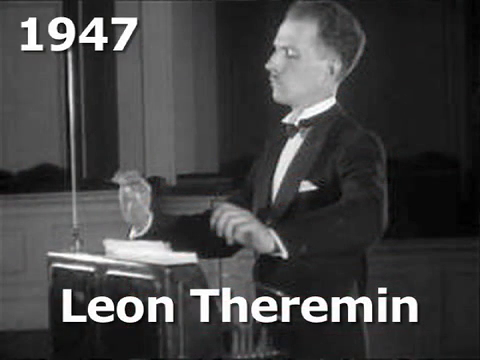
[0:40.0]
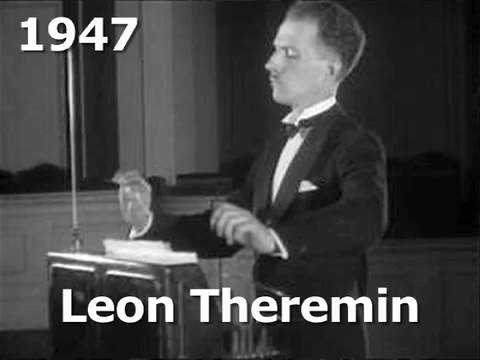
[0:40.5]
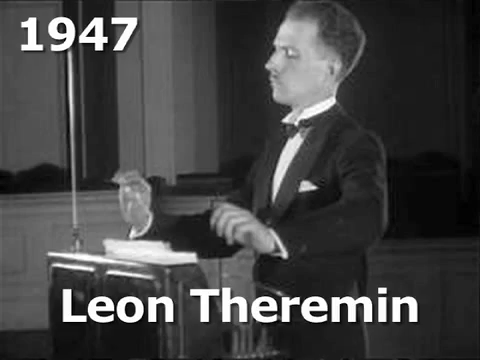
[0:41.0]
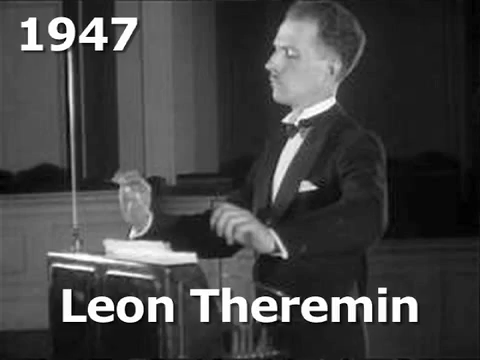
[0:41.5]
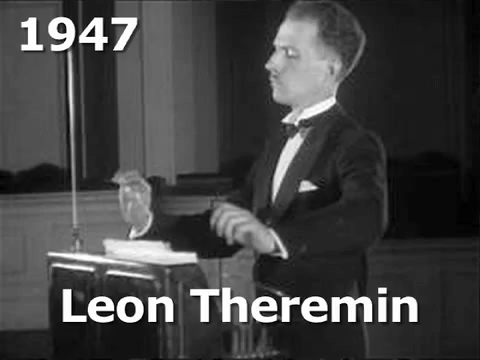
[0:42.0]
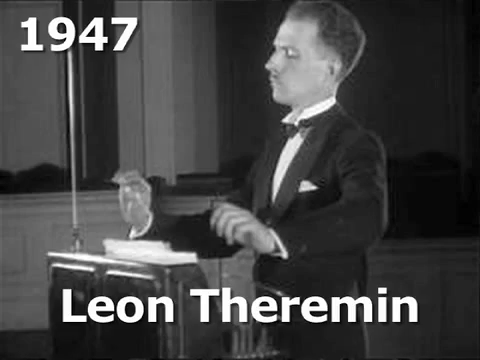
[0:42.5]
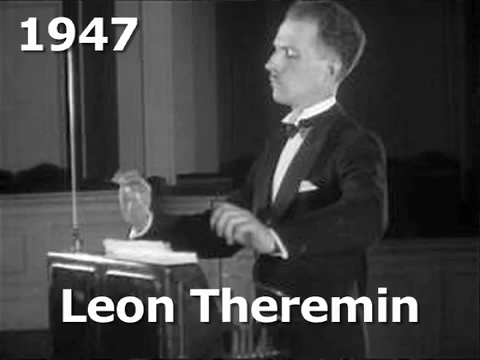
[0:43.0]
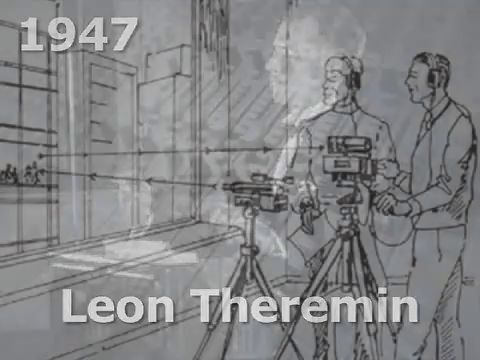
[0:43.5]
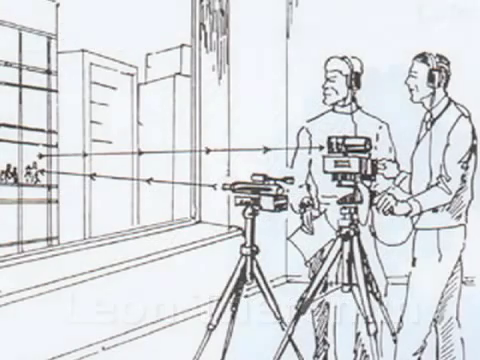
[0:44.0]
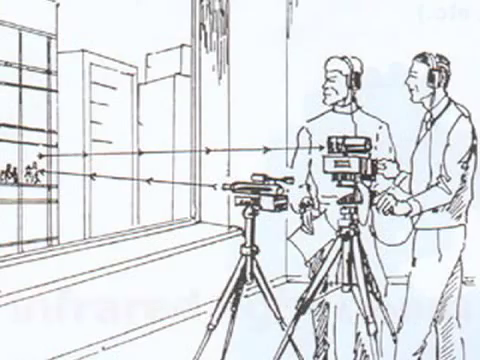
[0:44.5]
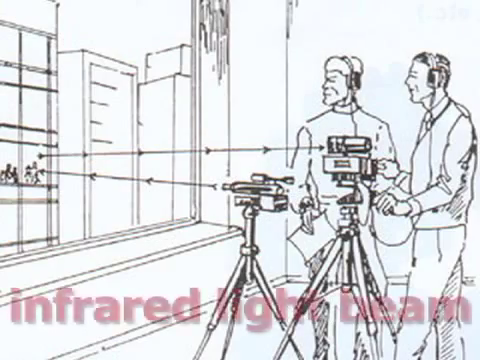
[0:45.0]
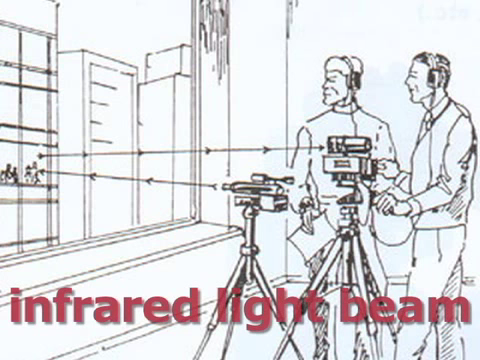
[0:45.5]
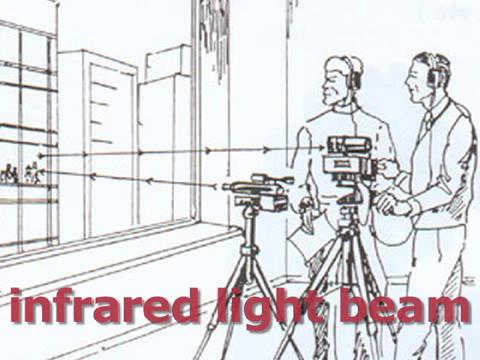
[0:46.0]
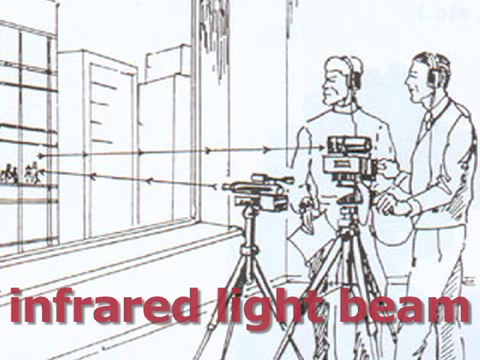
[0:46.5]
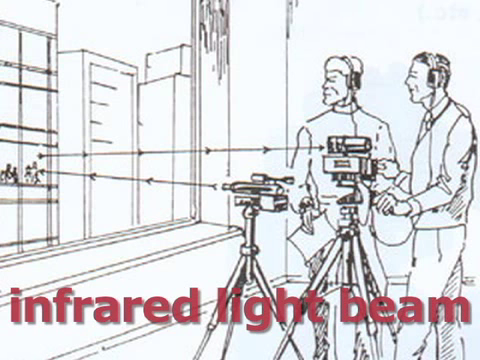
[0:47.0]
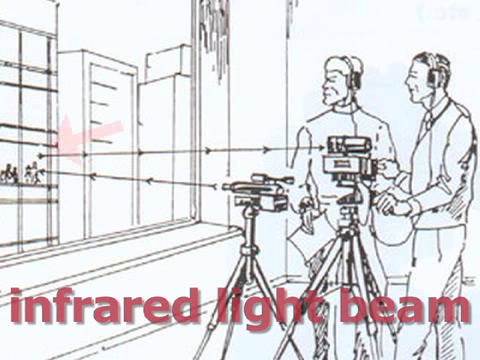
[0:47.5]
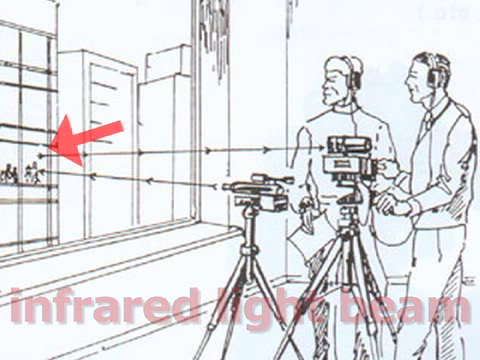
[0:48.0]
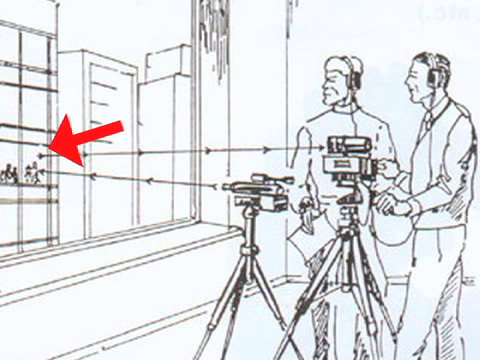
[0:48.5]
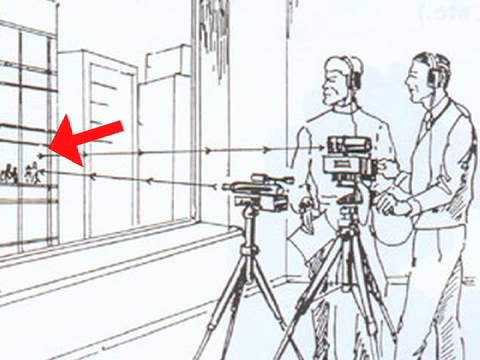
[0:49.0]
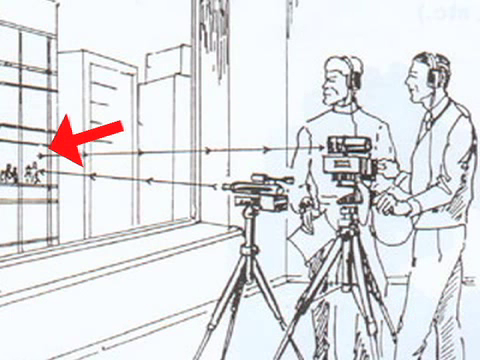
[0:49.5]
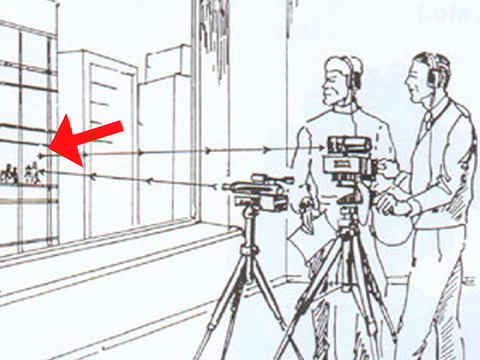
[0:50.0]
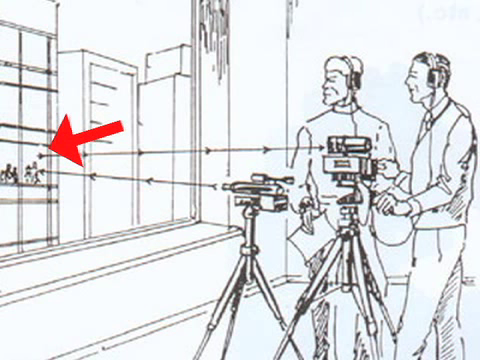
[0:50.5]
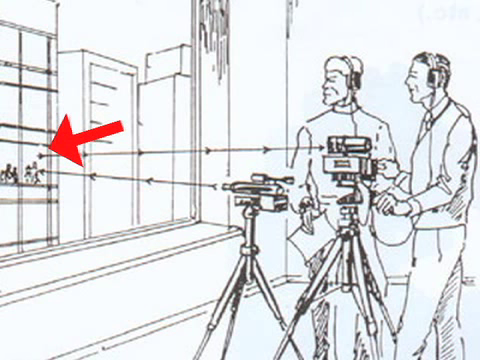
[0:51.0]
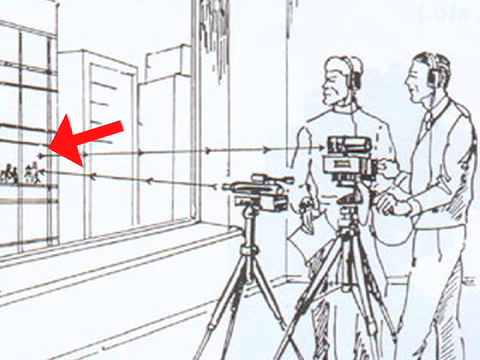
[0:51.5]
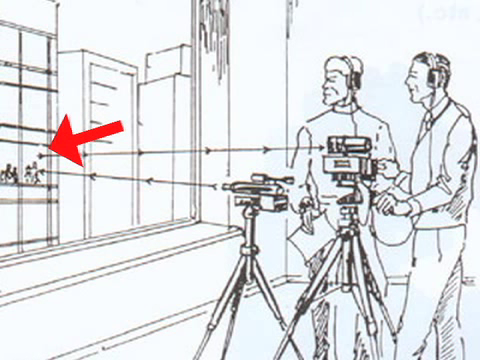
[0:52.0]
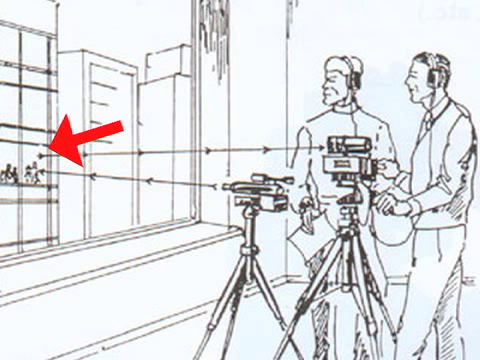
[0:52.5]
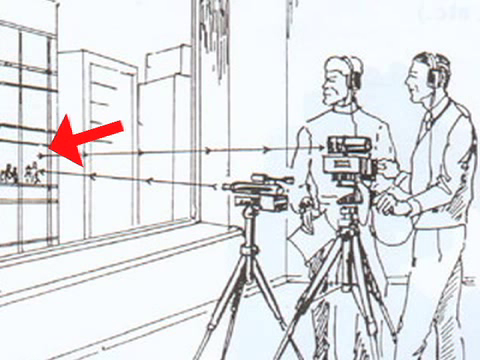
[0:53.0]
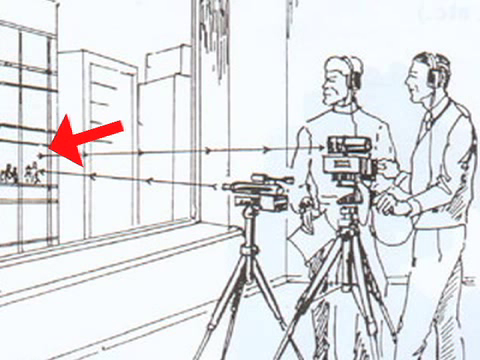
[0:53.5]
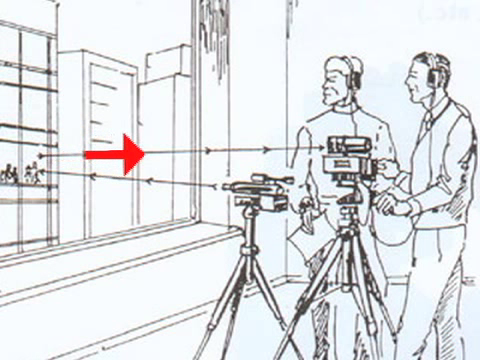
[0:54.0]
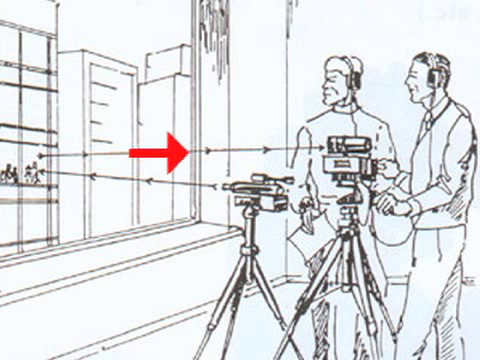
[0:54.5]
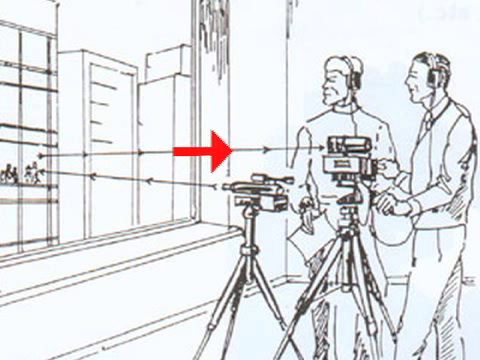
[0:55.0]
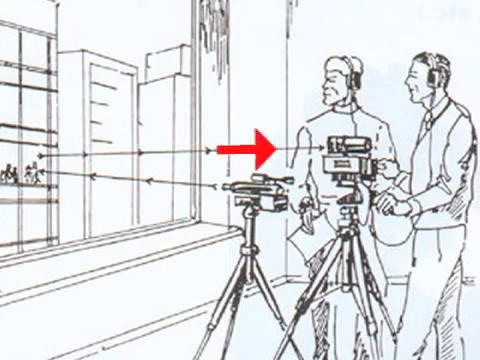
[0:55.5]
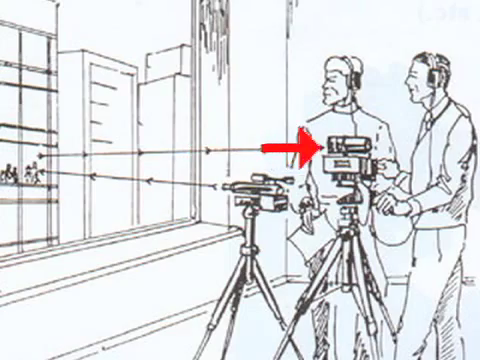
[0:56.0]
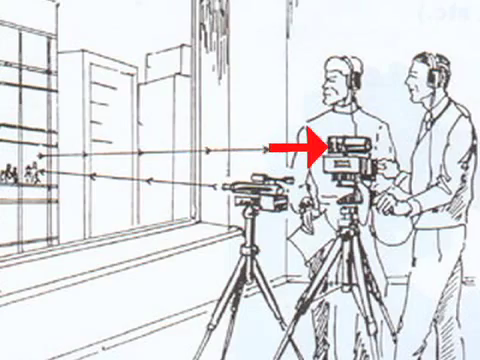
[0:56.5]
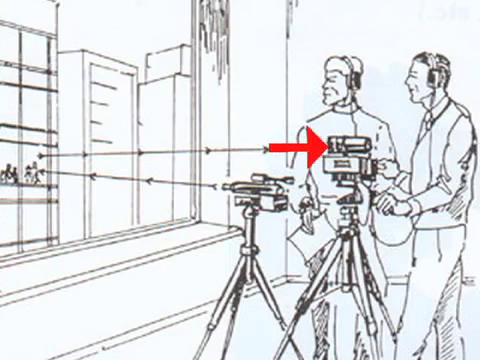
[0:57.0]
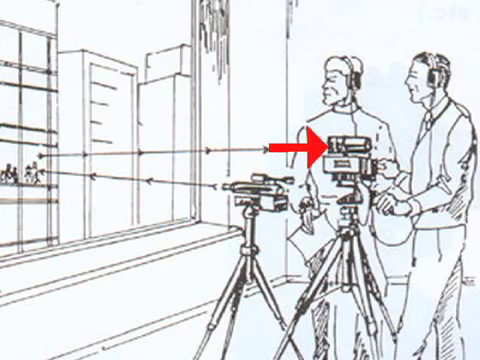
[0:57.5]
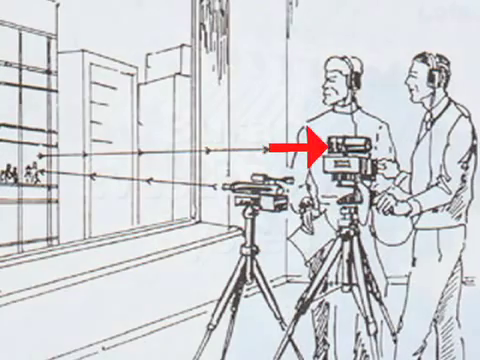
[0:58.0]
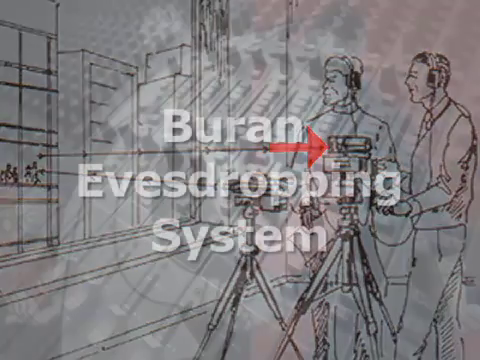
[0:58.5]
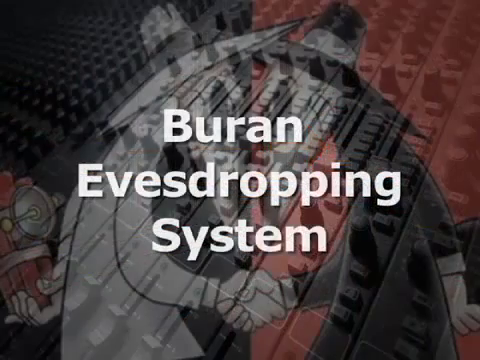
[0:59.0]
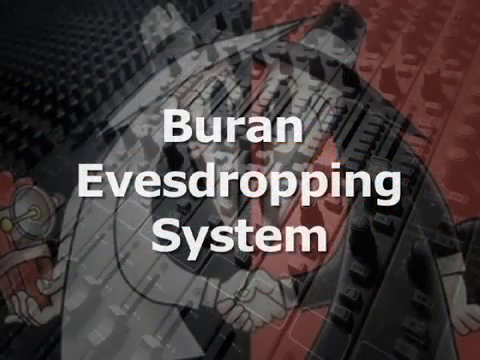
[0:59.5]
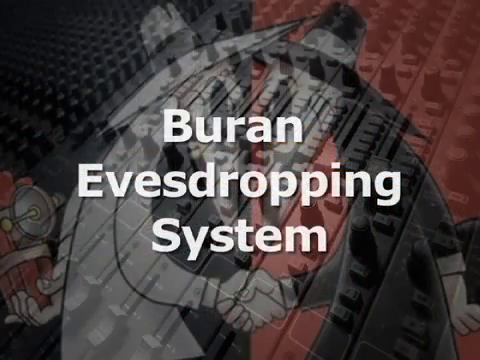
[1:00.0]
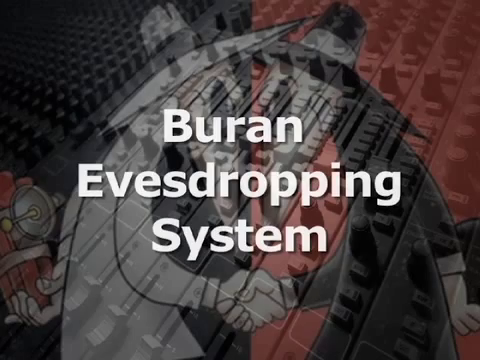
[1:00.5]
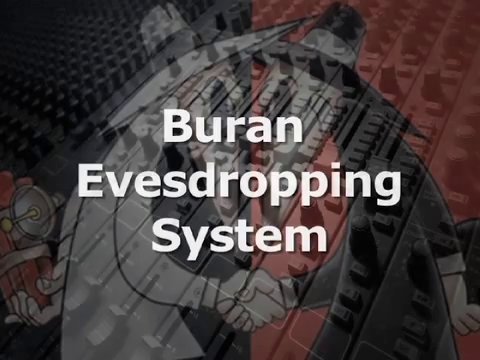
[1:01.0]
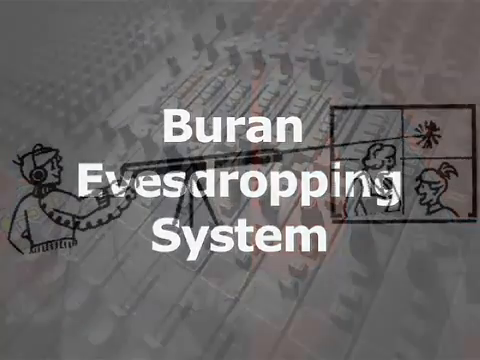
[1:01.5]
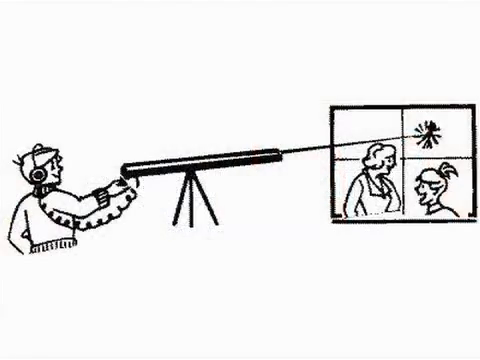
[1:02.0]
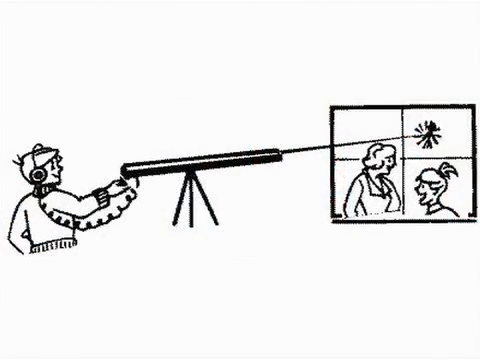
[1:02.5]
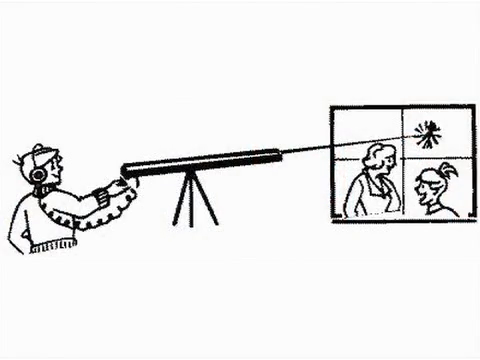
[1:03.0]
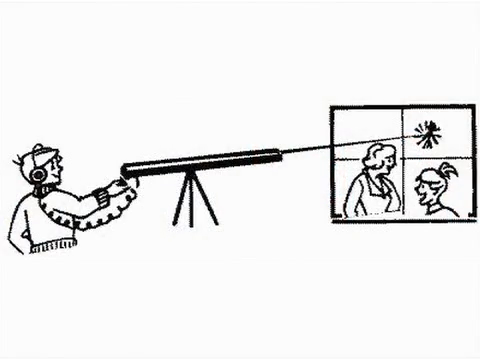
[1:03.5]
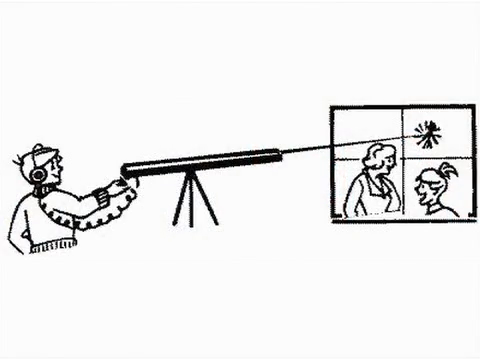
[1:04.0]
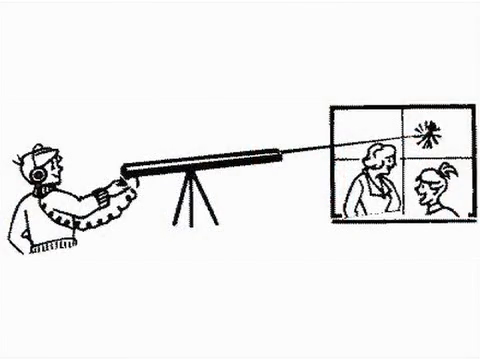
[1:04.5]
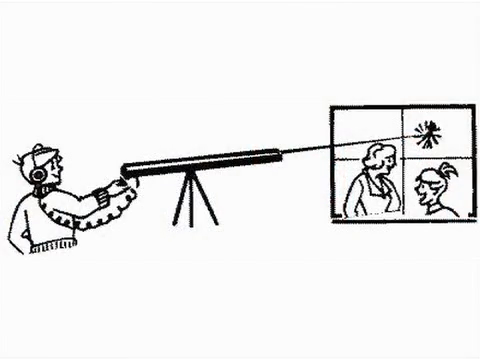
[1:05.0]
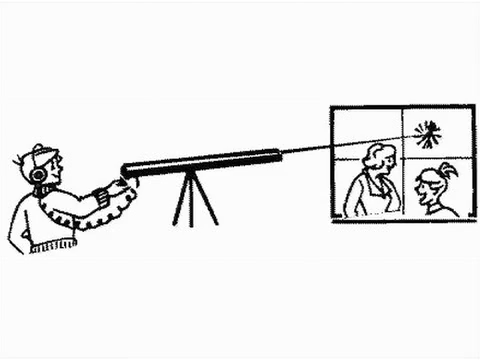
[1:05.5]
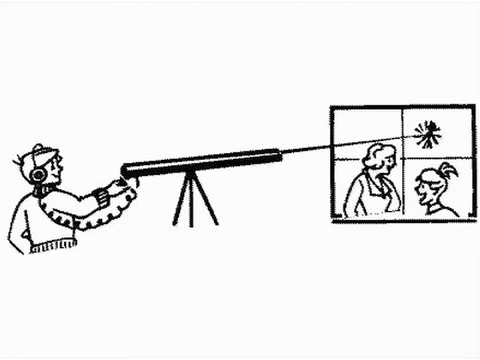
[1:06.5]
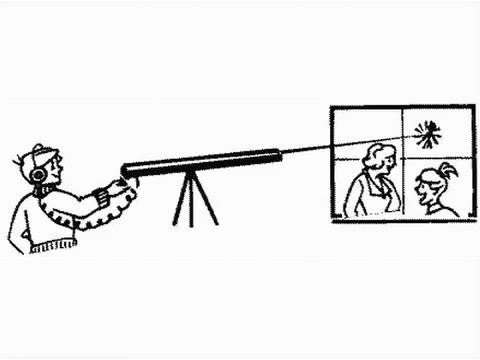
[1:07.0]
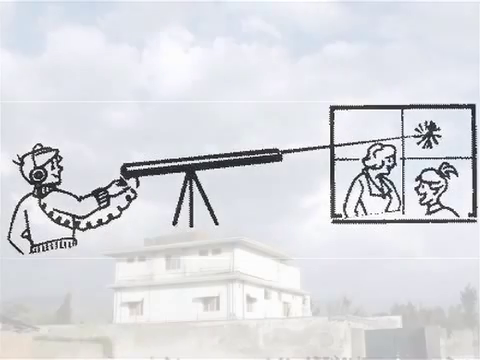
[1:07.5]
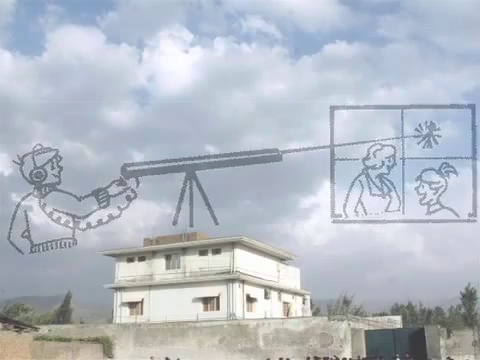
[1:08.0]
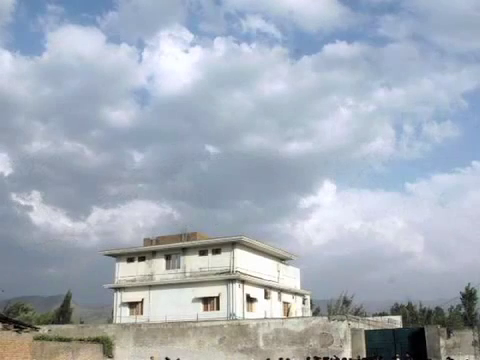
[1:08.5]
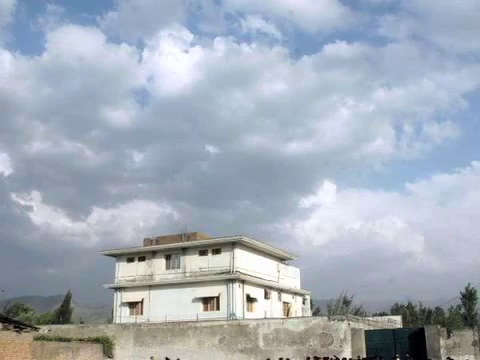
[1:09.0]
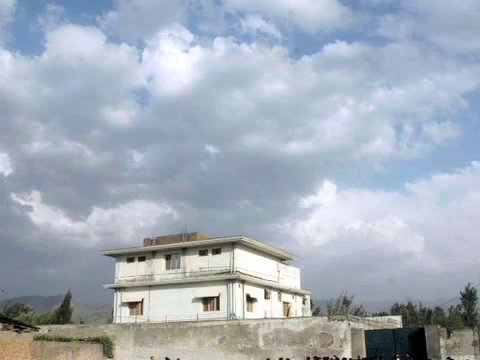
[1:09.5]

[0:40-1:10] An old black-and-white photo is shown, taken in 1947; the year "1947" appears in white bold font, along with a name in white bold font, and the man appears to be the inventor of this microphone. Two men use a laser to point at distant objects, apparently a person, and the words "infrared light beam" are written on a red board. An arrow points to where the laser is aimed and where the laser's source is, and a word is written in white on an arrow shape. A person plays with the laser, shooting it through a window that breaks. At the end of the video, there is a house.